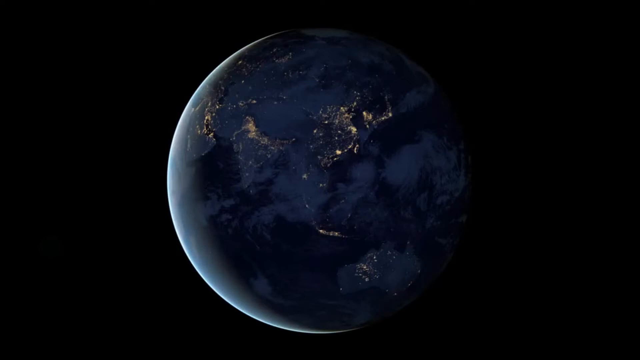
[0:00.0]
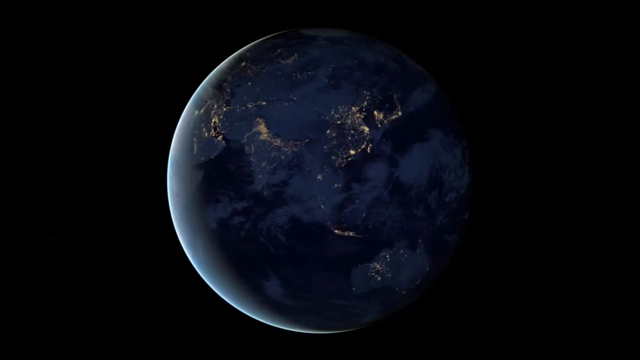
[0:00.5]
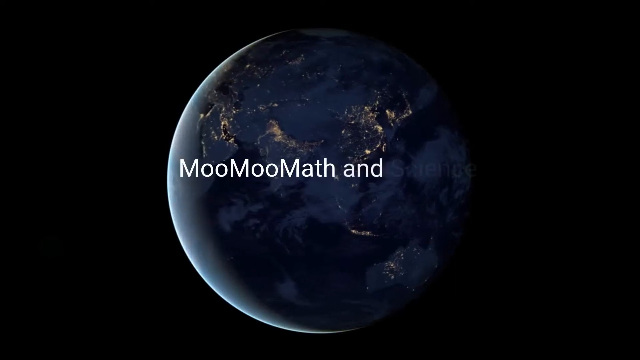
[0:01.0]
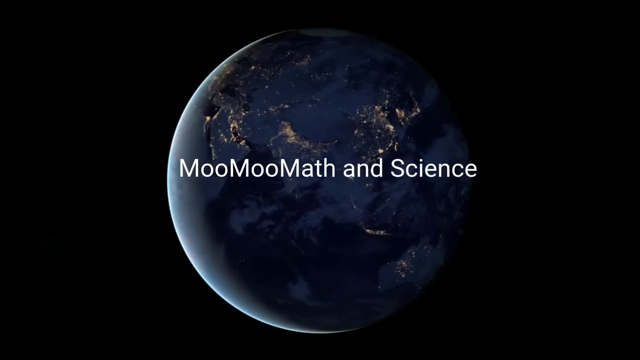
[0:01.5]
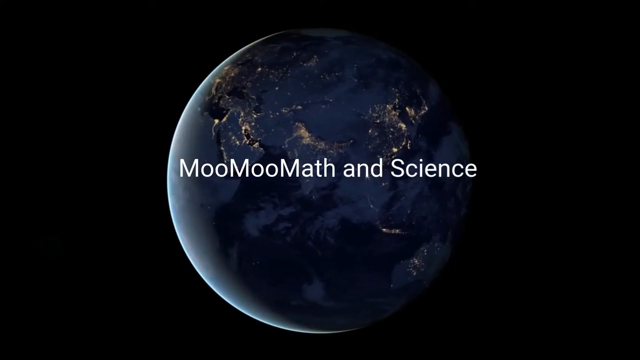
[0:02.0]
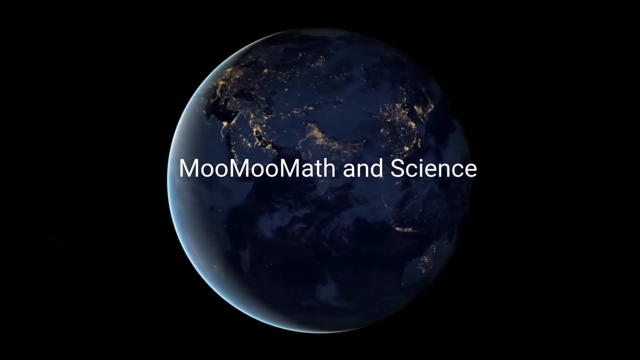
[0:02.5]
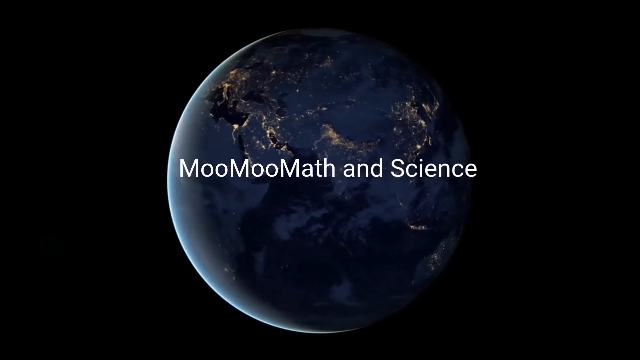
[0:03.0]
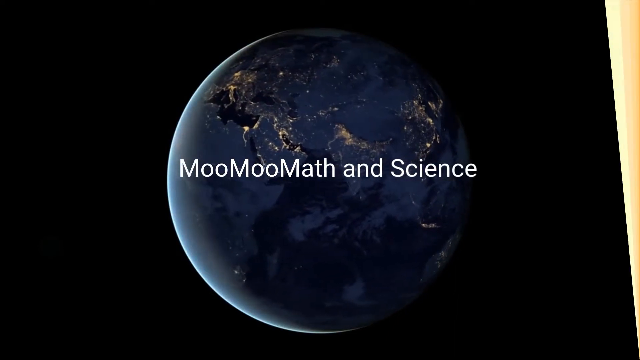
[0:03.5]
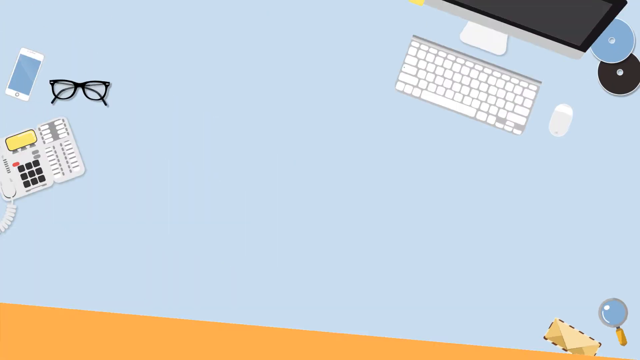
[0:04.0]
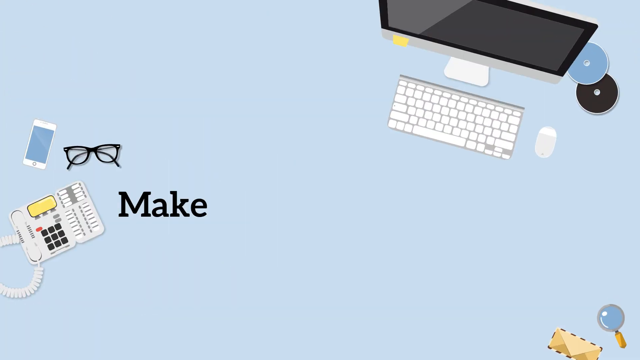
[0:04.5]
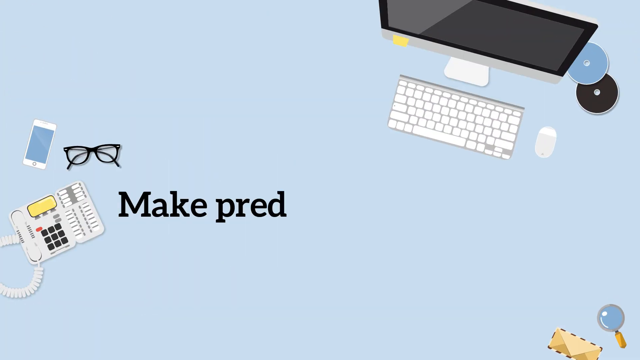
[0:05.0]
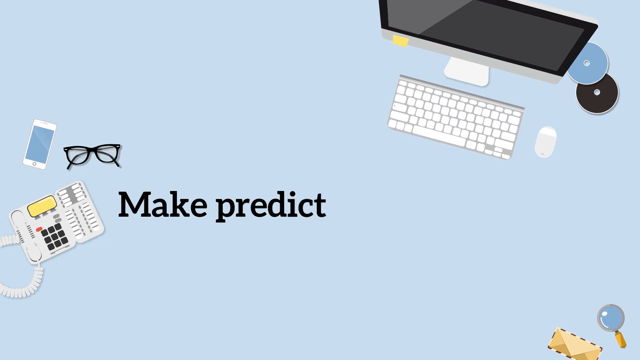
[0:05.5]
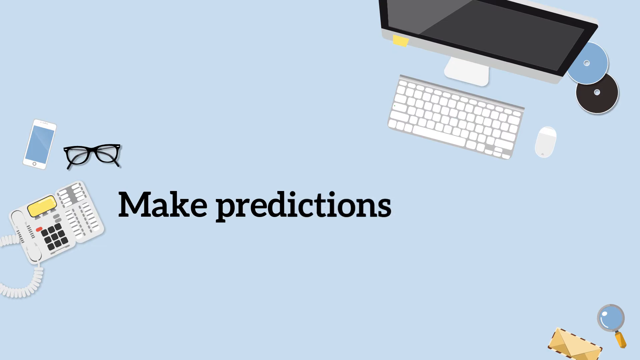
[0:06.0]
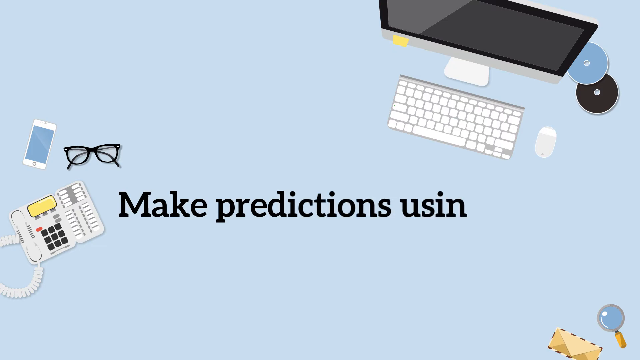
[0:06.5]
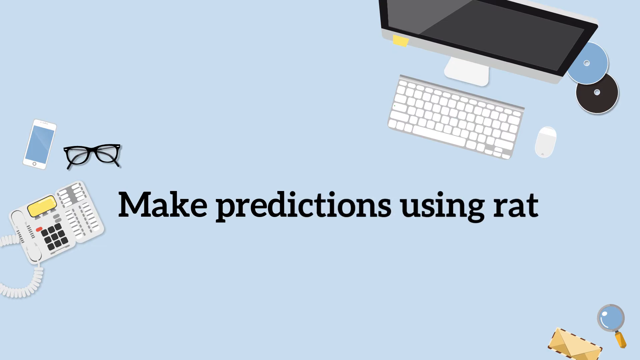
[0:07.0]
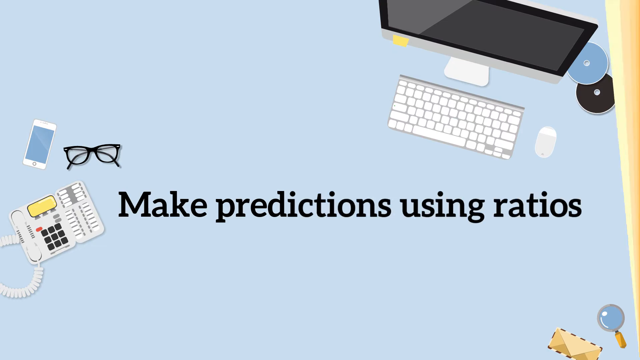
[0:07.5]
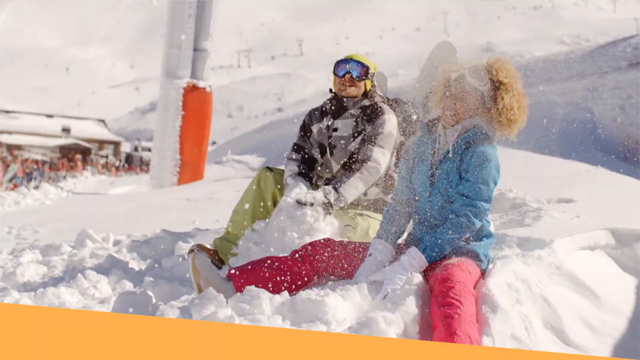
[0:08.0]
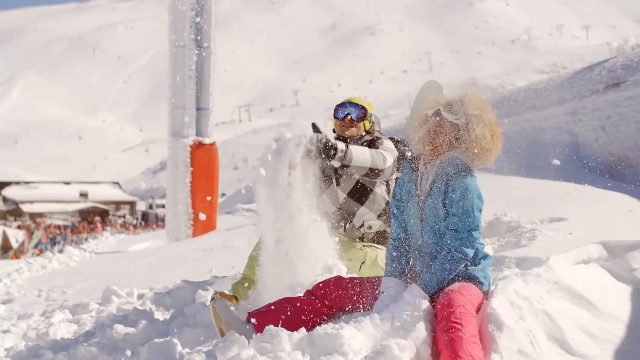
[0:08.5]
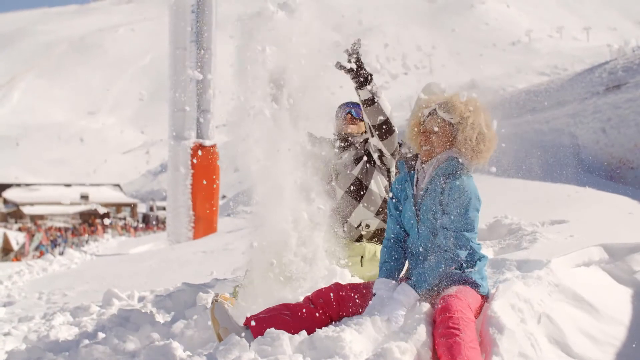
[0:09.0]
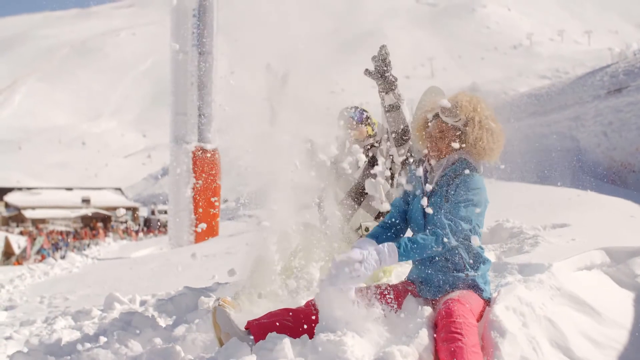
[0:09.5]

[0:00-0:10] Seen from outer space, the earth turns at nighttime. The continents are barely visible, but the lights of major metropolitan areas can be seen. Overlaid on the turning globe is the title "Moo Moo Math and Science." A flat yellow graphic border then wipes diagonally down from the upper right-hand corner of the screen, revealing a light blue background with a cartoon-like graphic. An old-school coil telephone is in the lower left-hand corner, and the view appears to look down at a desk: a smartphone is next to a pair of glasses, and in the upper right-hand corner there is what appears to be an iMac computer with a magic Bluetooth keyboard and mouse. A title is typed one letter at a time in black text: "make predictions using ratios." A similar diagonal wipe, this time with a golden, yellow or orangish background, comes down from the upper right-hand corner and reveals an exterior medium two shot of two people in a very mountainous, snowy area that looks like a ski resort. They sit in deep snow and appear to be throwing the snow up in the air. On the left is apparently a man wearing some type of flannel in a big checkered pattern of black, gray and white, with winter gear, gloves, a hat and possibly goggles. Sitting next to him on the right of the screen is a woman in a light sky blue winter coat, tight pink, apparently magenta, leggings and white gloves. She appears to be blonde, and her ski goggles are worn up above her forehead rather than over her eyes. Both of them throw snow up in the air and smile.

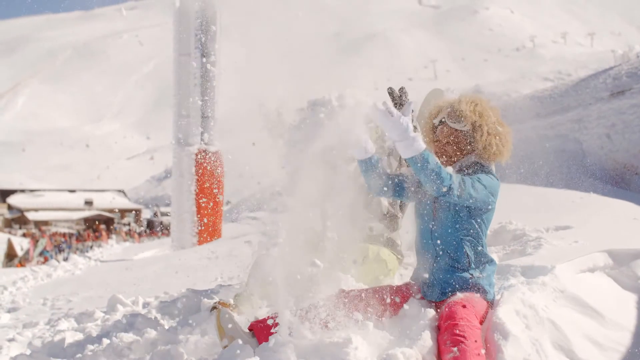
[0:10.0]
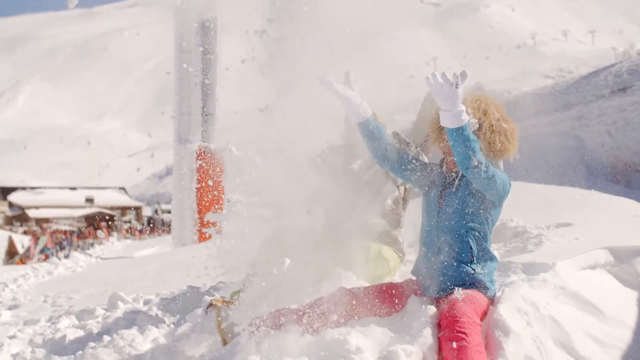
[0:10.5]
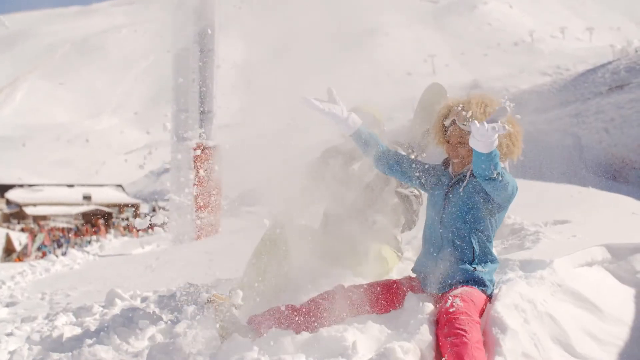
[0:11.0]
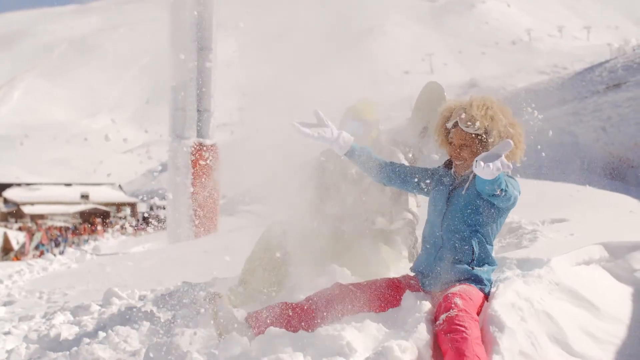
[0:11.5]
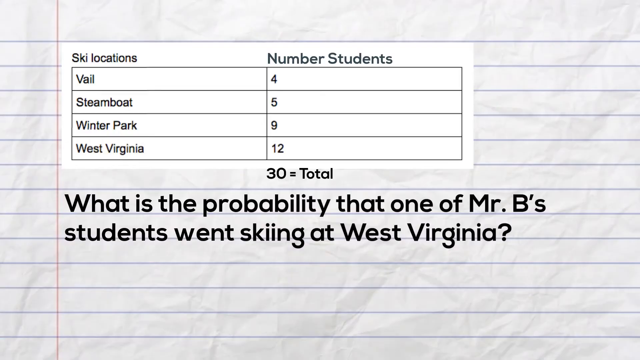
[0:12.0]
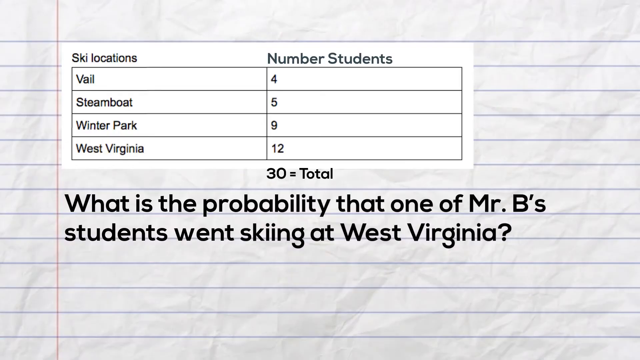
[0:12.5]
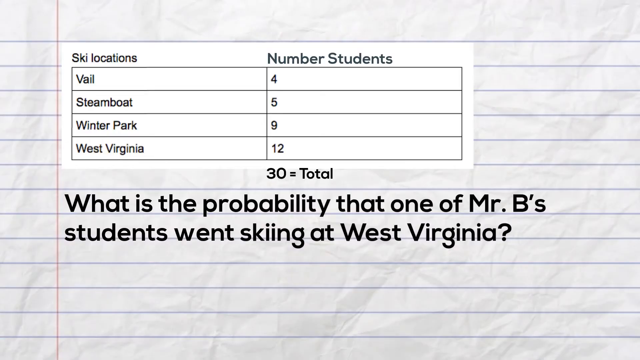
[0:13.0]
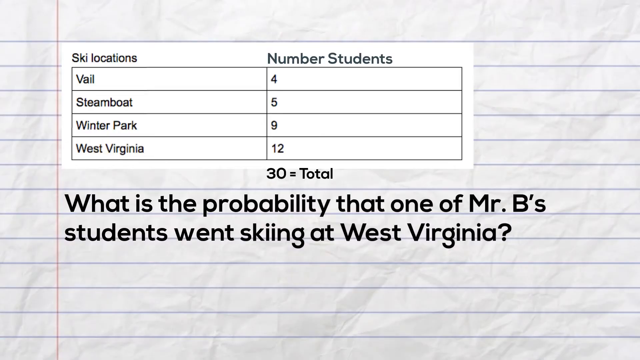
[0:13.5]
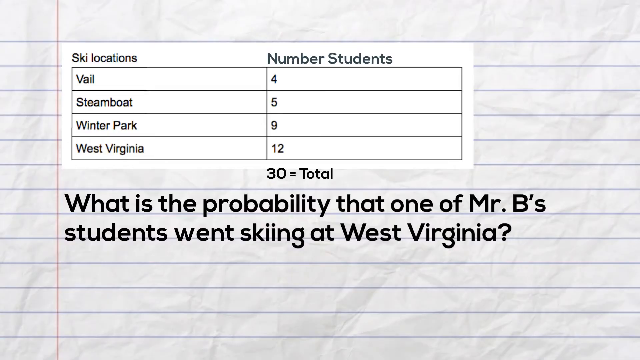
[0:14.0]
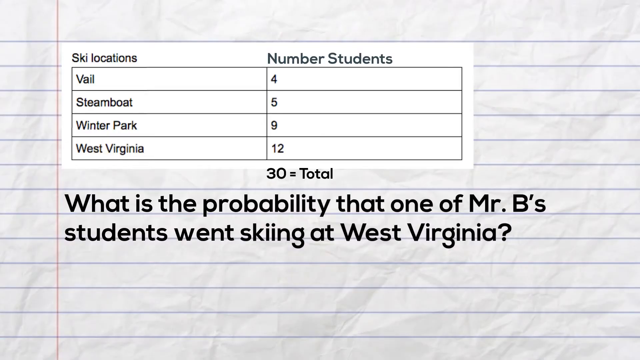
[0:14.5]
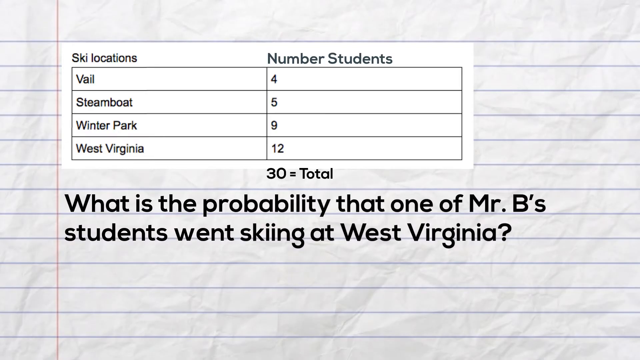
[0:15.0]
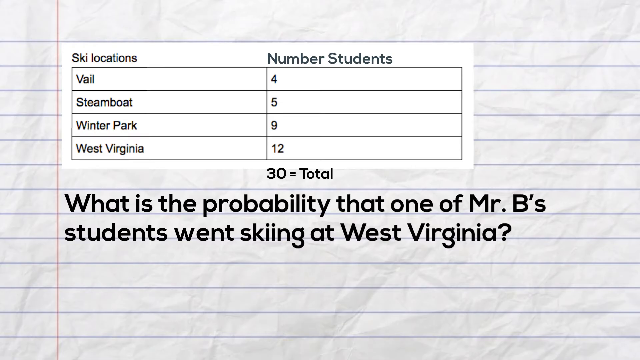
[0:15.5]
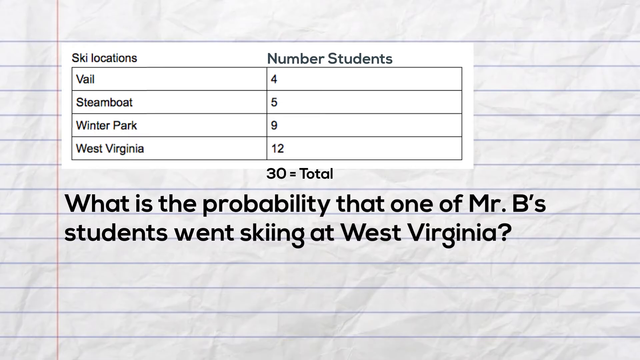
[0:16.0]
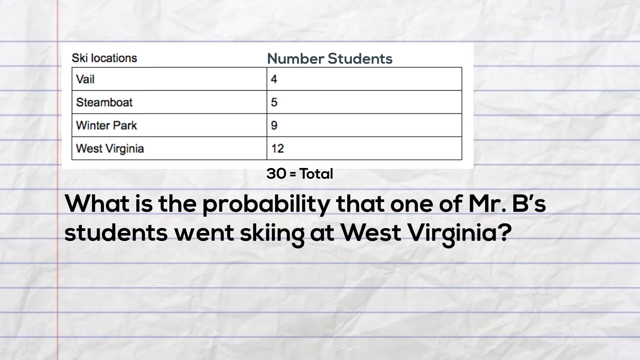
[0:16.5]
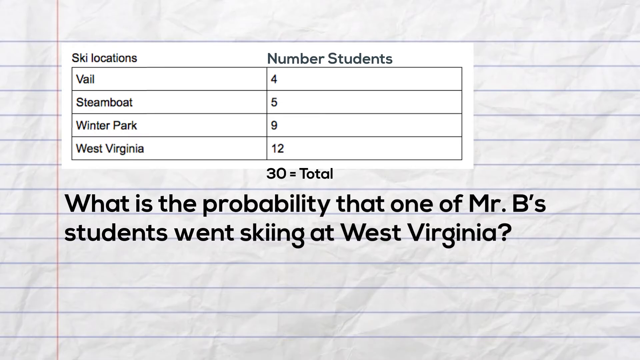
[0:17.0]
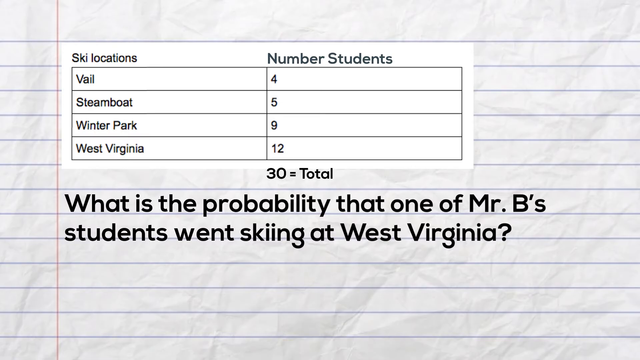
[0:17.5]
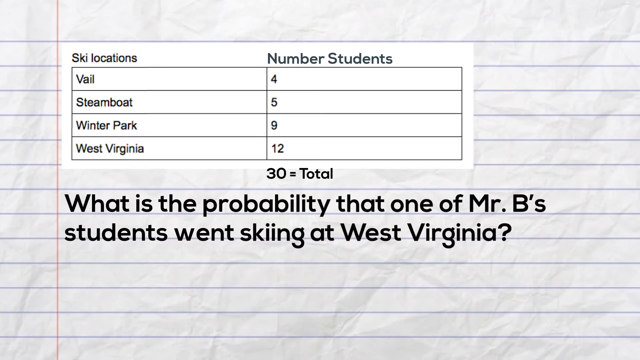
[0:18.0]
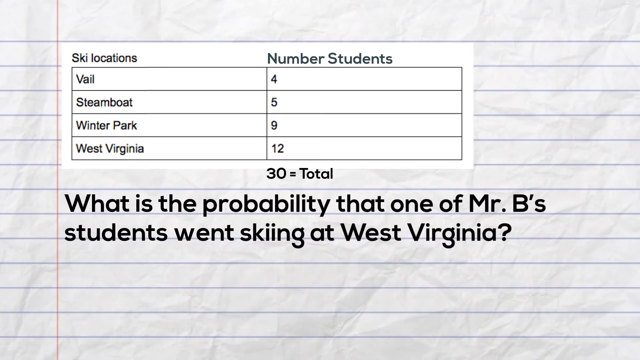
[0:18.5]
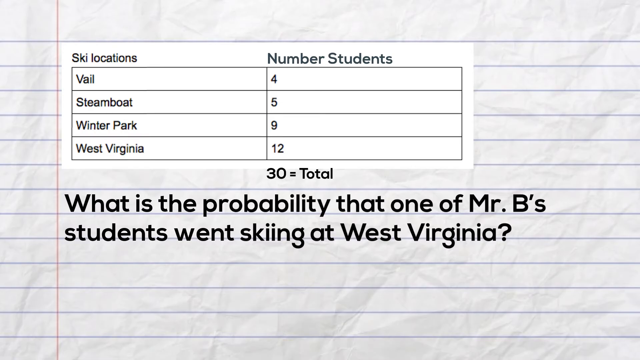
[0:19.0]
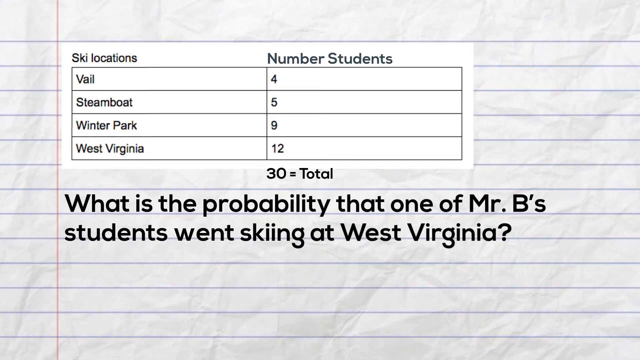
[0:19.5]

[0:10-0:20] The man and woman throw snow up in the air. The video then cuts to a view looking down at a partially crinkled, crumpled academic notebook page with a red vertical line down the left margin and purplish-blue horizontal lines. Inset on a plain white rectangle on the photorealistic notebook page is a table with two columns and four rows. The first column is titled "ski locations," with the rows reading Vail, Steamboat, Winter Park and West Virginia. The second column, to the right, is titled "number students," with the numbers 4, 5, 9 and 12 in its rows. Below the table, the number of students is totaled, with 30 as the total. About a line below the table, in bold black print on the notebook portion, is the question: "what is the probability that one of Mr. B's students went skiing at West Virginia?"